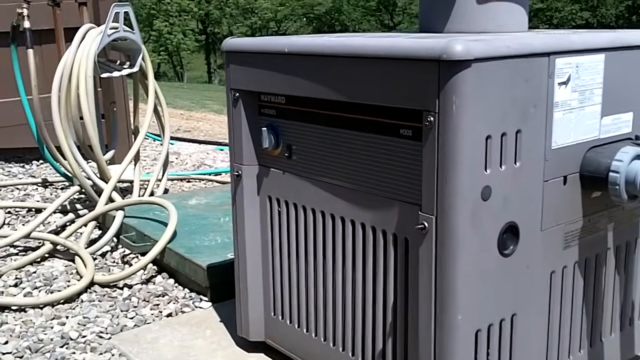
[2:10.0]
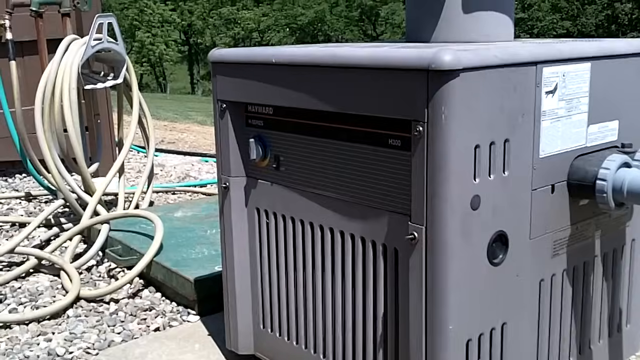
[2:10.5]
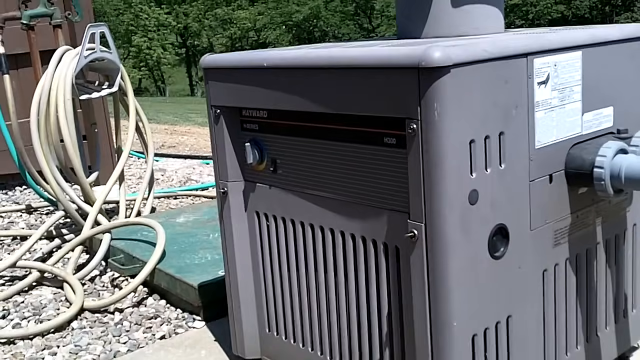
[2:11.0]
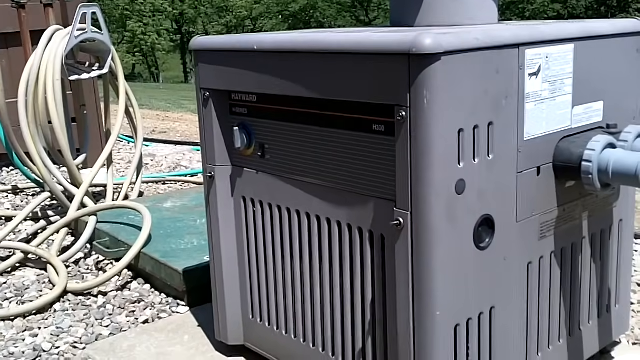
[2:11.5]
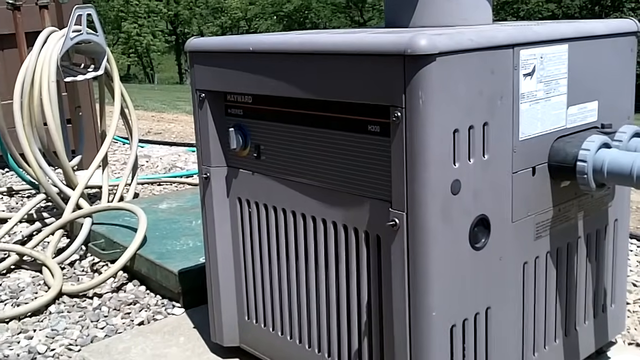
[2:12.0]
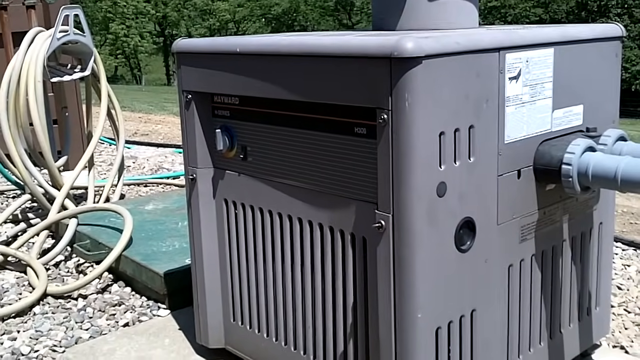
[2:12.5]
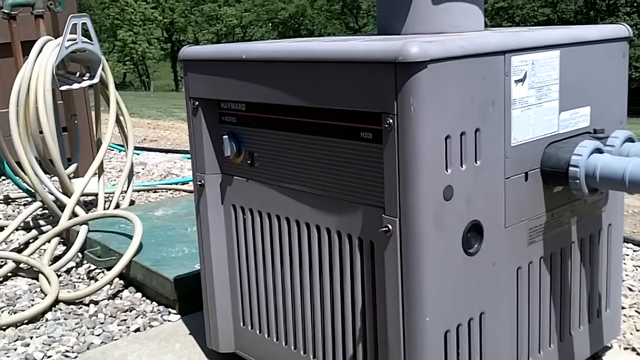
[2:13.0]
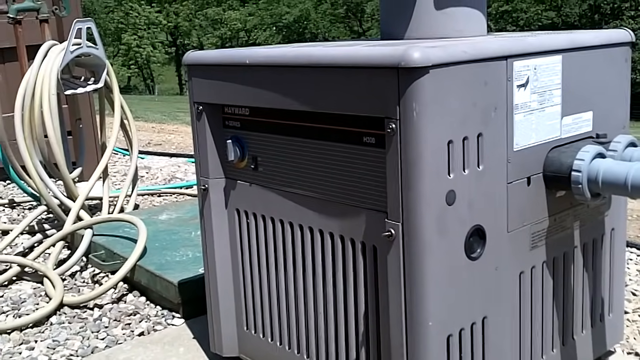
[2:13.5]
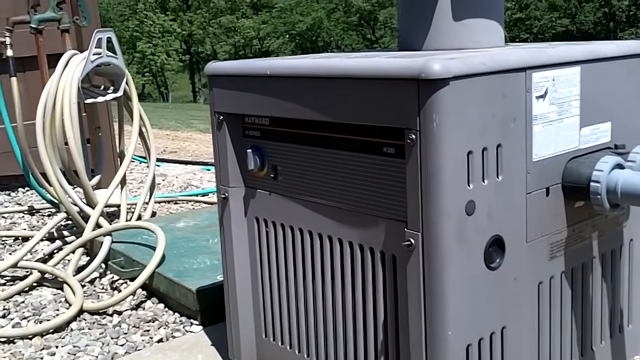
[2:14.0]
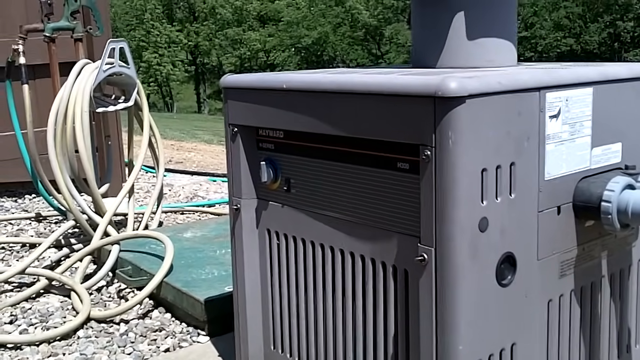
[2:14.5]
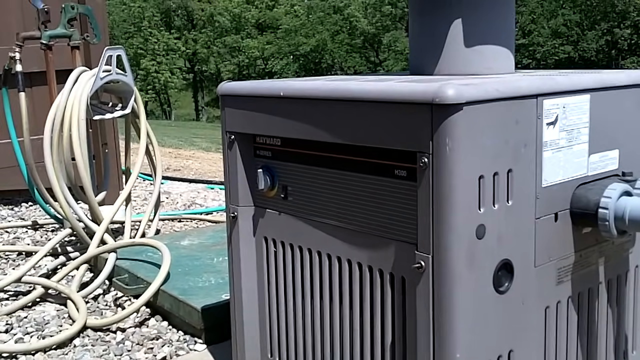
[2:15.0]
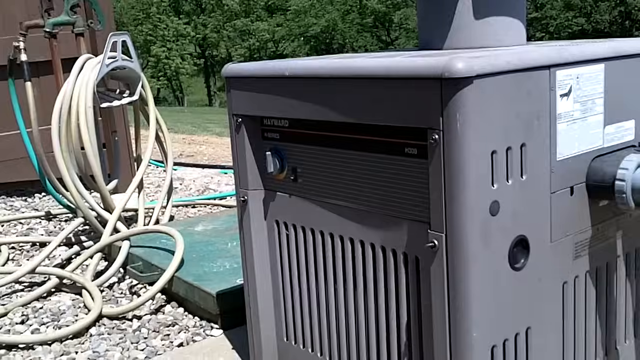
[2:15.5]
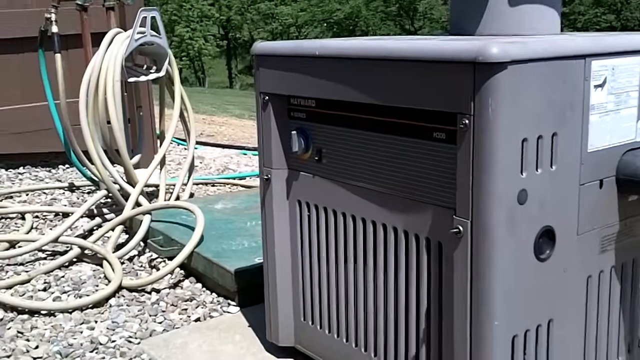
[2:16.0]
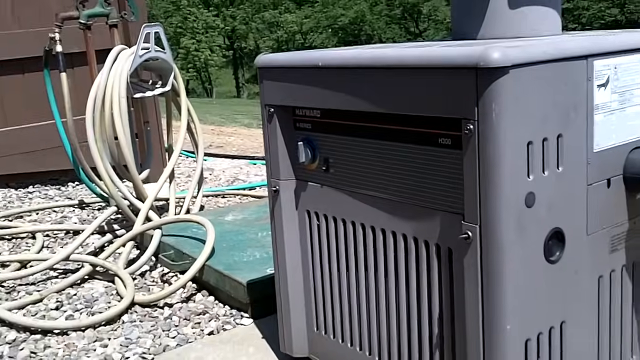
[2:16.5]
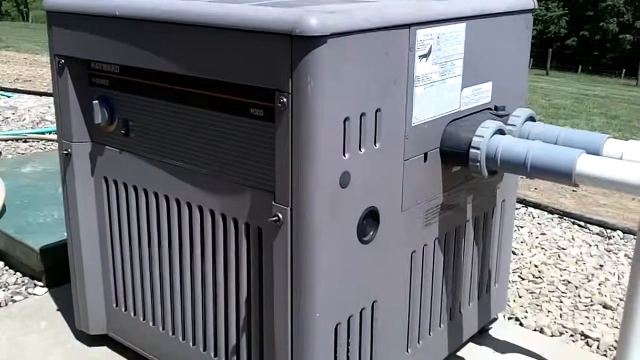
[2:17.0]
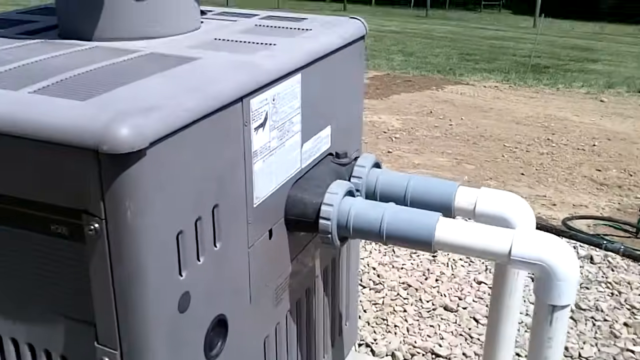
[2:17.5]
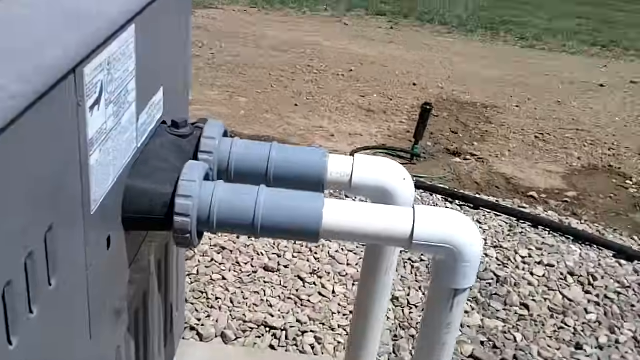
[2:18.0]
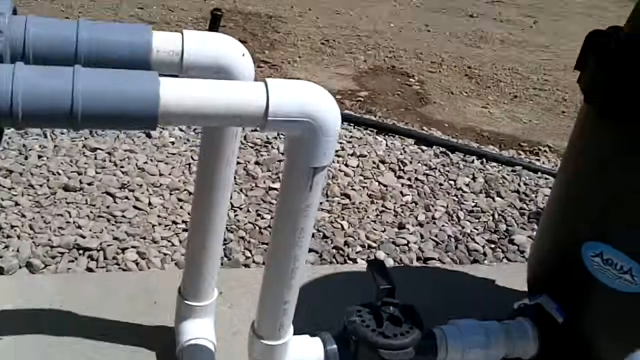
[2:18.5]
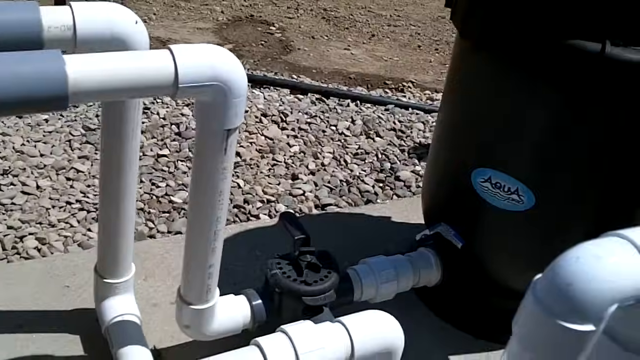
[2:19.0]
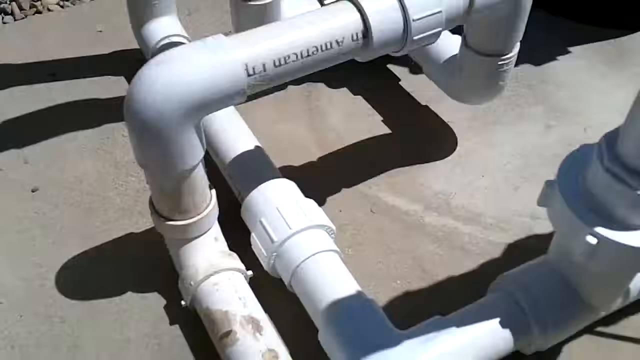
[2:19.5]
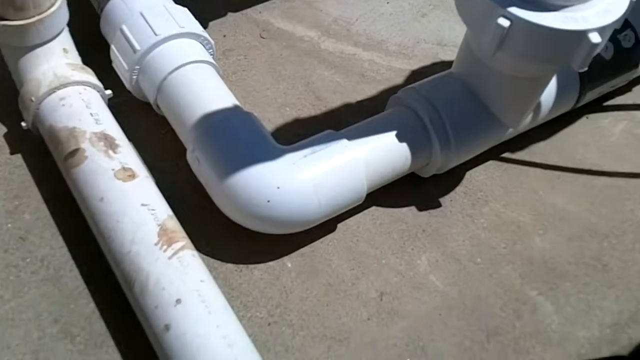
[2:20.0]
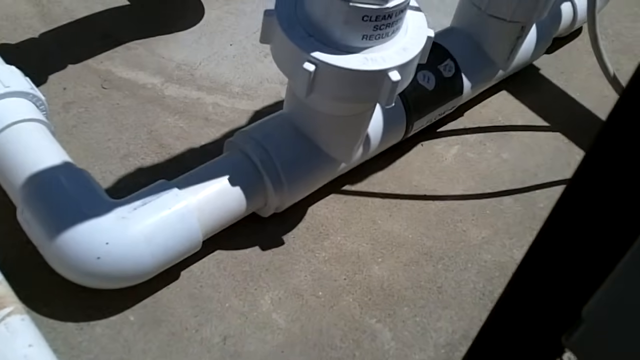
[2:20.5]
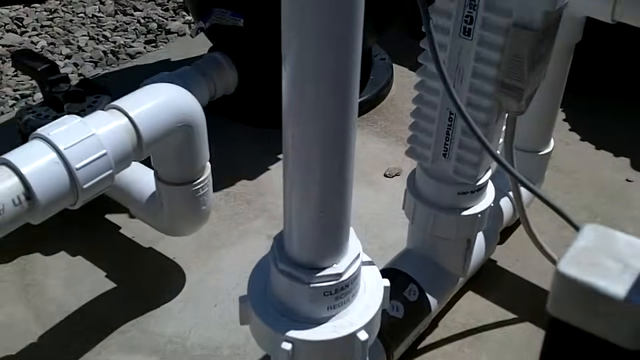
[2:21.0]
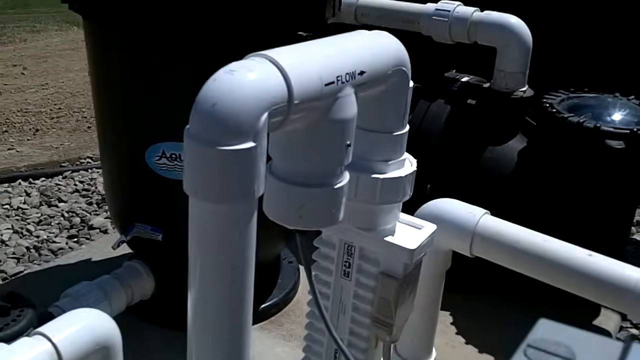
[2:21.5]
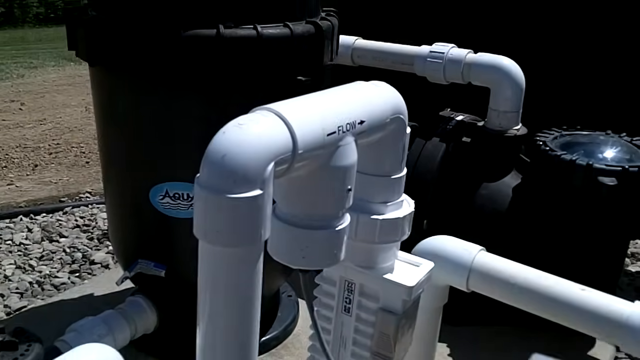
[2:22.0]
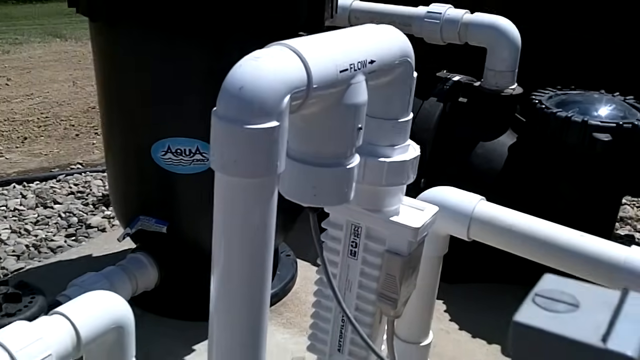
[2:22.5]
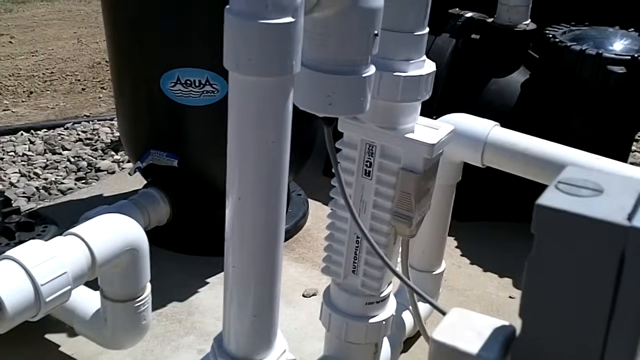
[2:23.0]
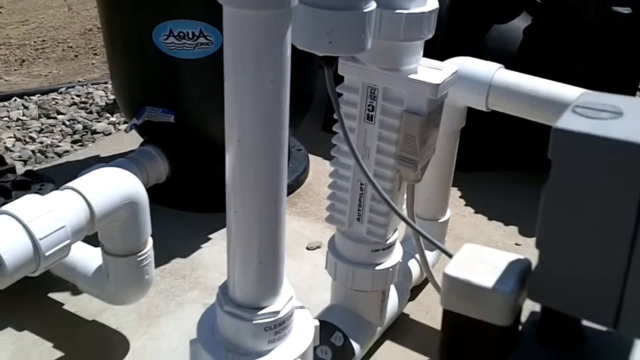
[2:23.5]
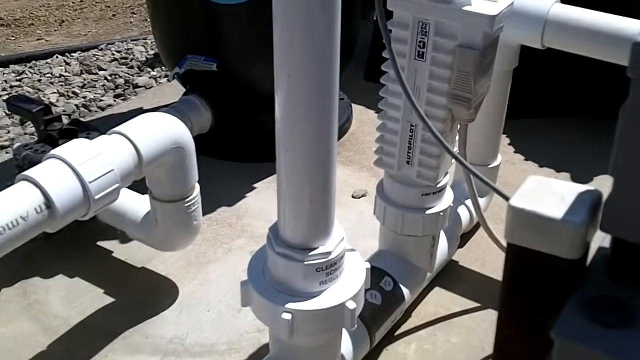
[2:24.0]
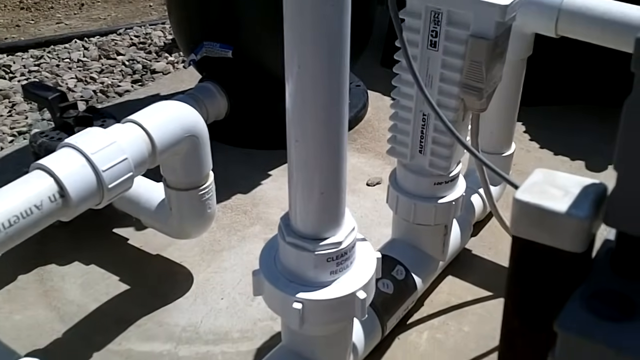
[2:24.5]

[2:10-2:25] The camera zooms in on the gray portion, showing the vents, then zooms into more of the white and gray tubing. Tubing on the right, in the middle portion of the cement, is being referenced; it is on top of the cement portion of the apparatus. The apparatus is very wide, as is evident from all the materials. White tubing with the gray covering is visible, and trees, grass, gravel and rocks are in the background. Some water is also visible; it looks like maybe a hose was used to water down a portion in the background. There is a lot of camera panning, moving more toward the center.